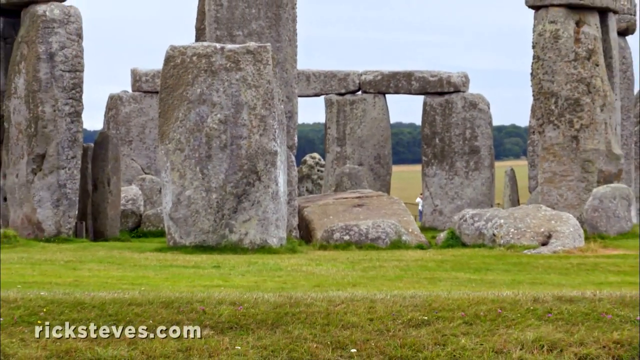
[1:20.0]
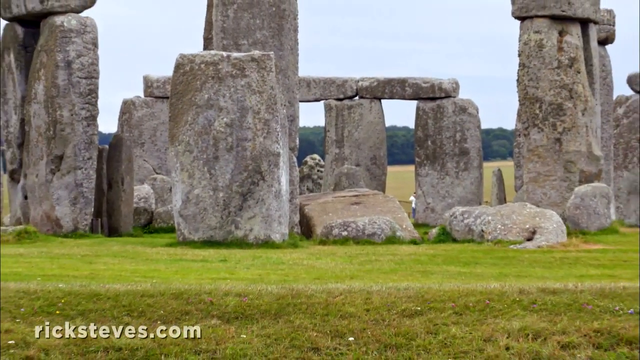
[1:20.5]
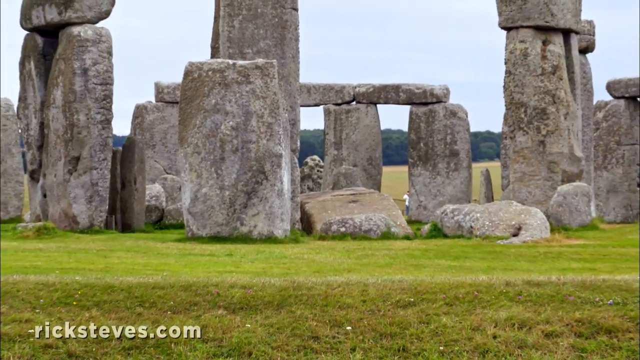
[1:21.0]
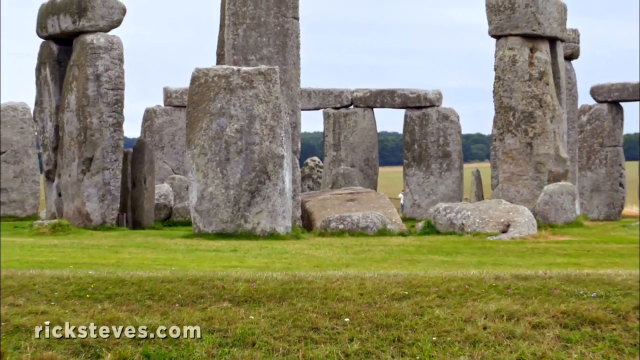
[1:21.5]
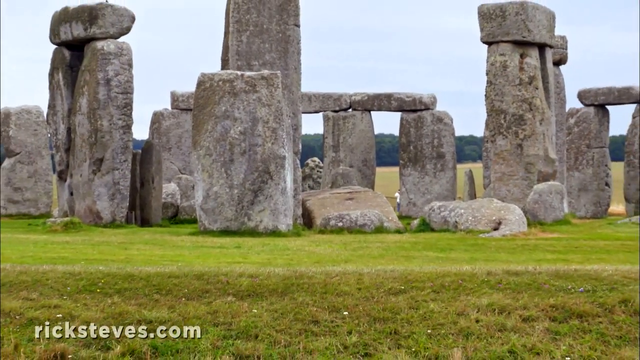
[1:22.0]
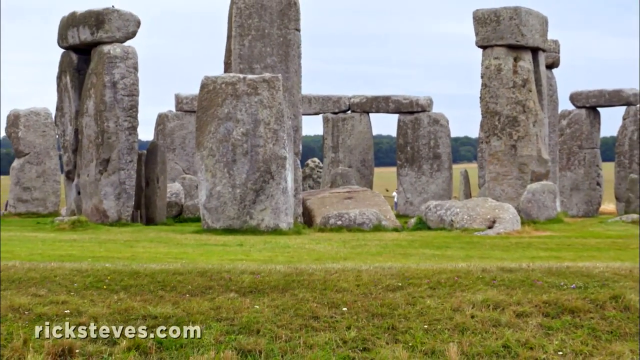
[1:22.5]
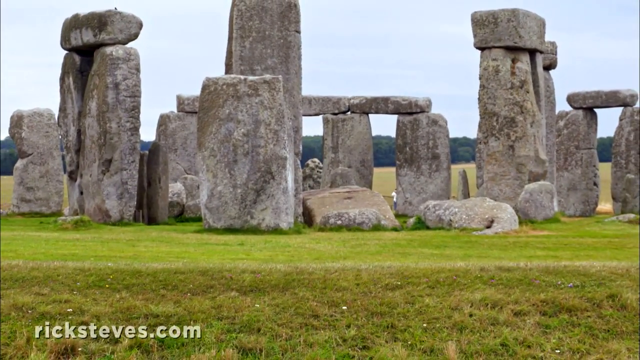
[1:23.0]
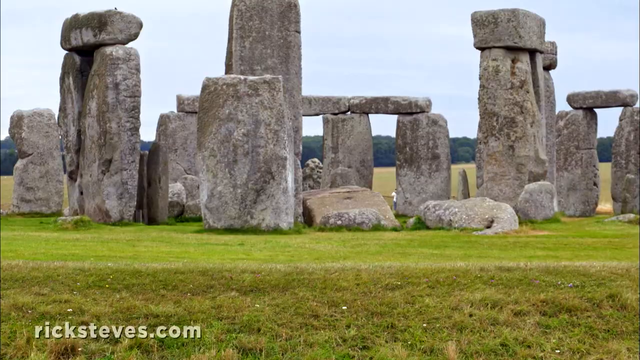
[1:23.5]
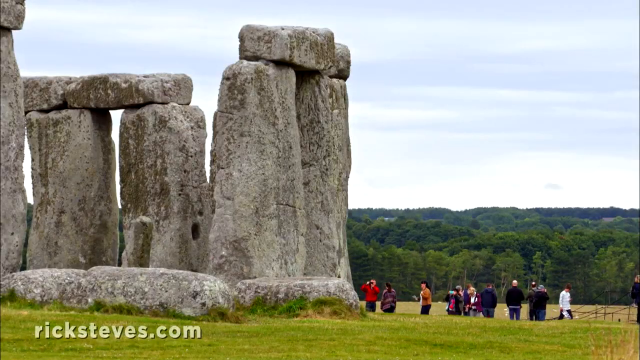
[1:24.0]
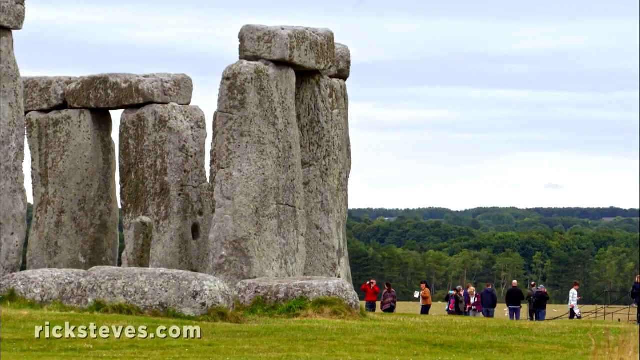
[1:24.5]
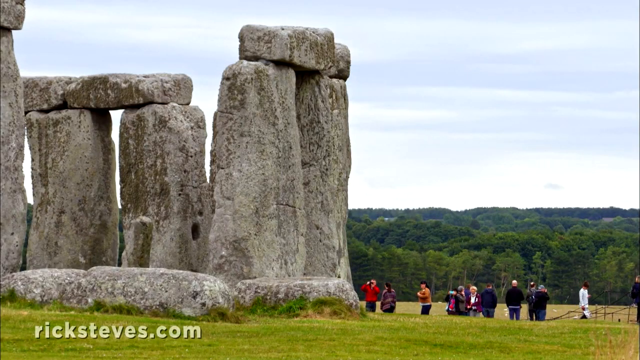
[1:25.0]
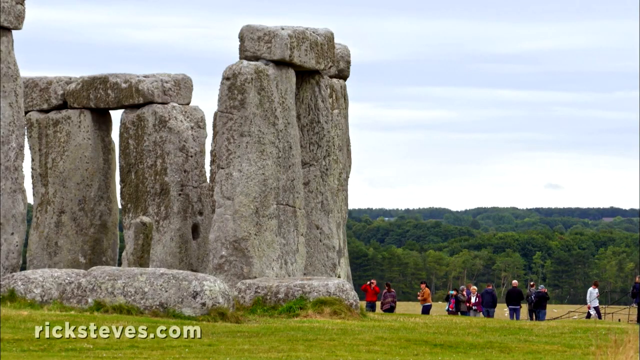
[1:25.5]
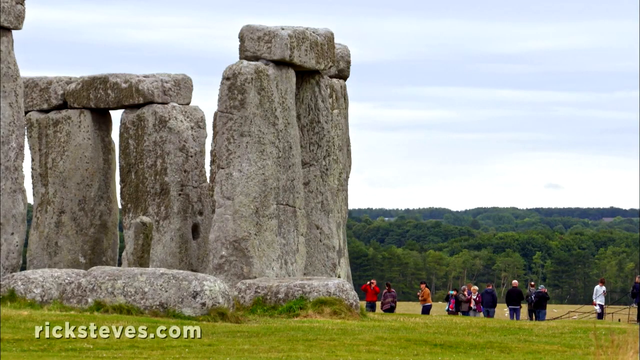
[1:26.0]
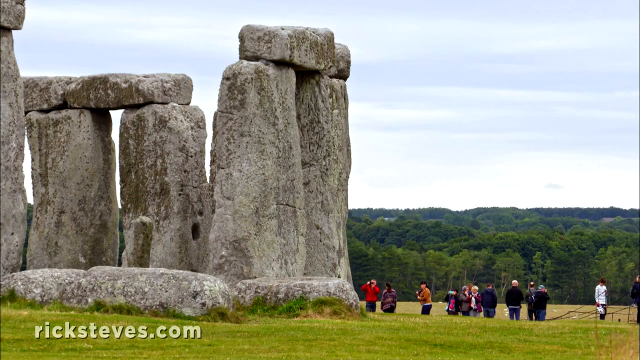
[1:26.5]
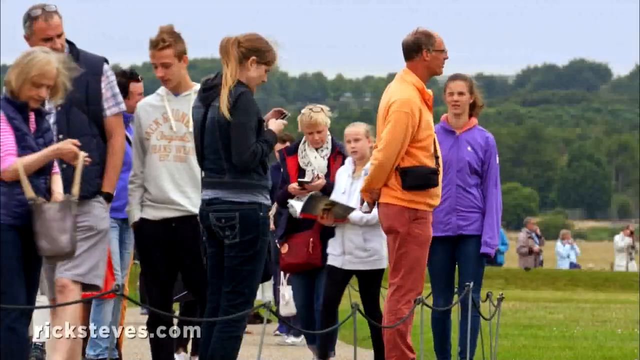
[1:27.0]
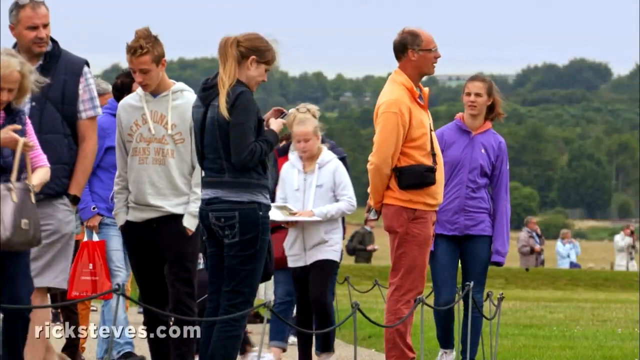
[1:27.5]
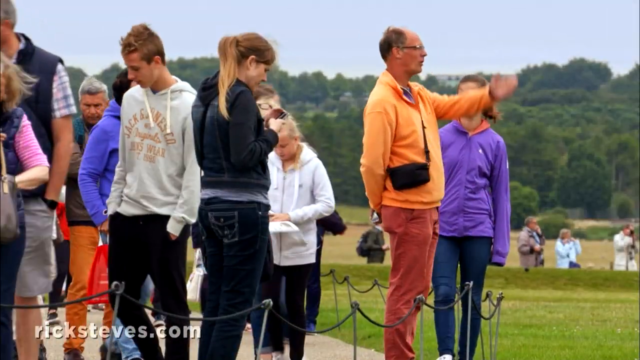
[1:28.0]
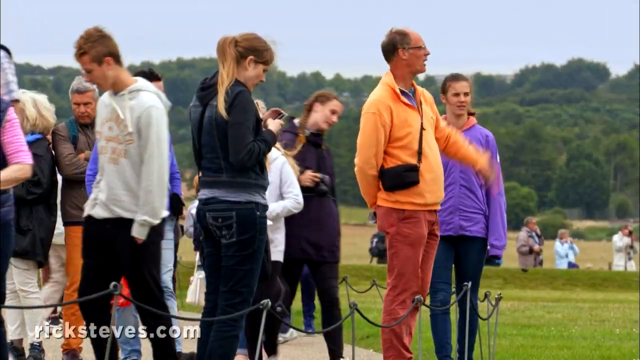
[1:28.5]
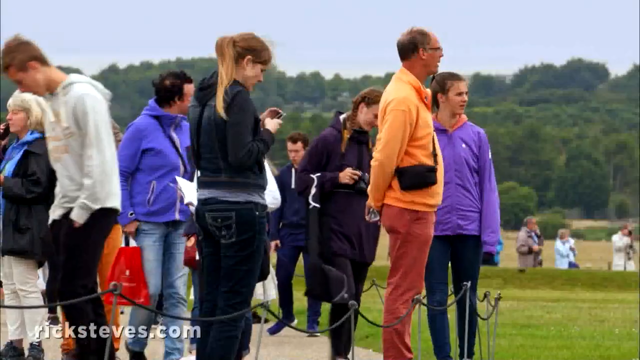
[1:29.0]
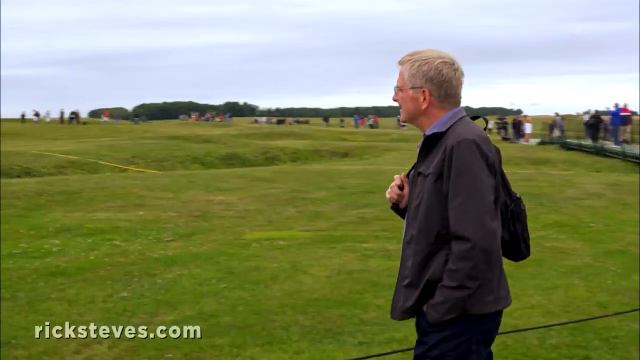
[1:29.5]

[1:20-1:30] Stonehenge is in view, with a lot of tourists off to the right. A man walks around with a bag on his right shoulder. A man in an orange sweater and pinkish red pants points towards Stonehenge. A man uses binoculars to look up at the stones on top of Stonehenge. A man in a white long-sleeve shirt walks in the opposite direction with something in his right hand that looks like a bag. About 20 people walk in various directions in the tourist area. In one shot, a woman fiddles with her phone in front of the camera.